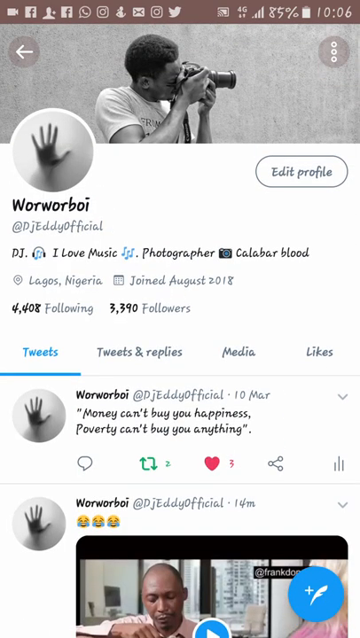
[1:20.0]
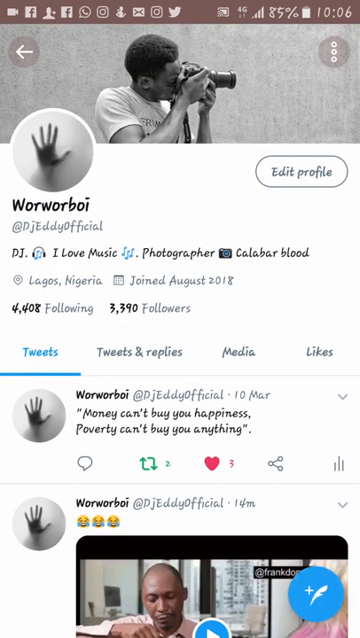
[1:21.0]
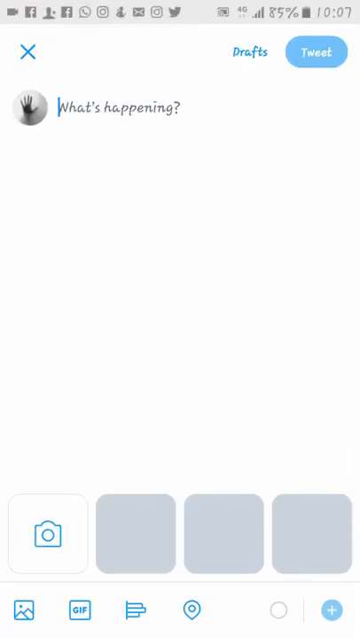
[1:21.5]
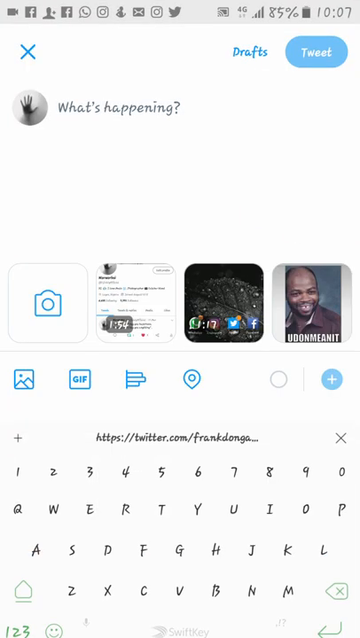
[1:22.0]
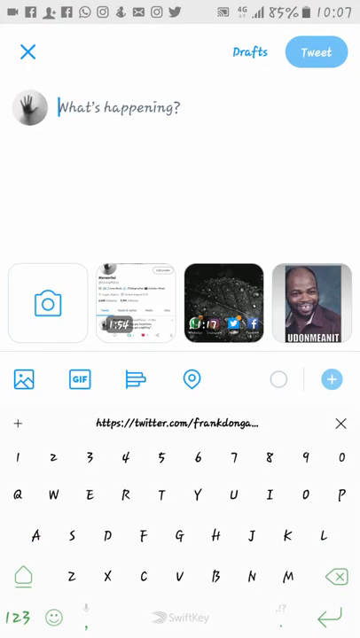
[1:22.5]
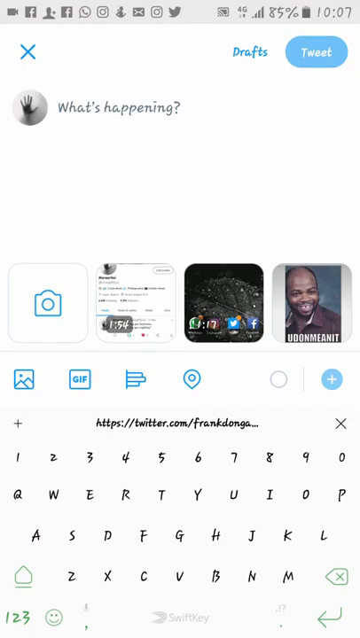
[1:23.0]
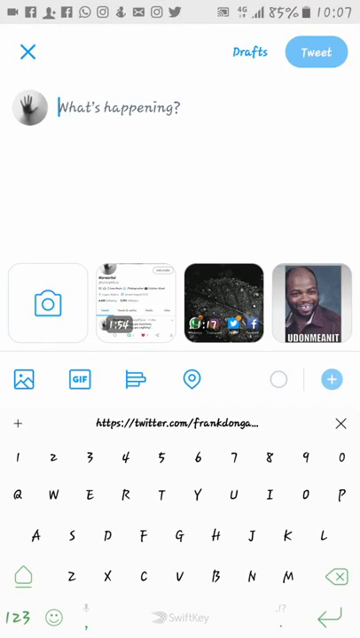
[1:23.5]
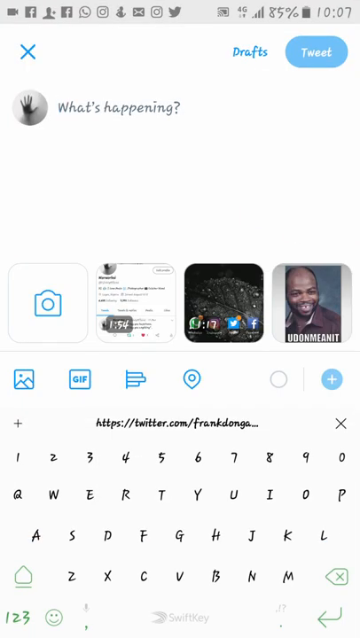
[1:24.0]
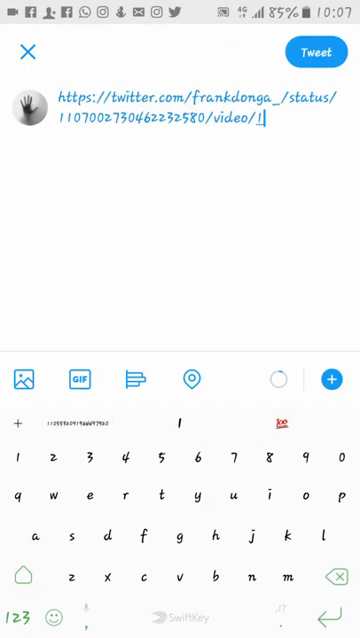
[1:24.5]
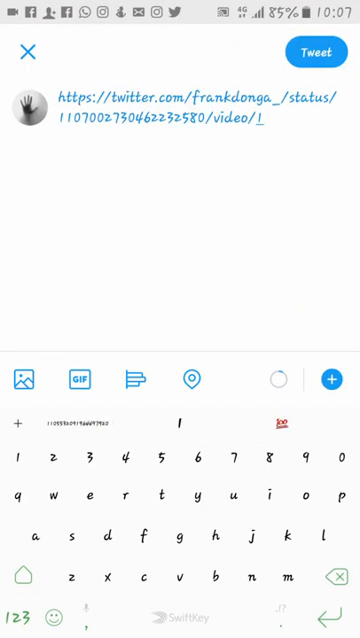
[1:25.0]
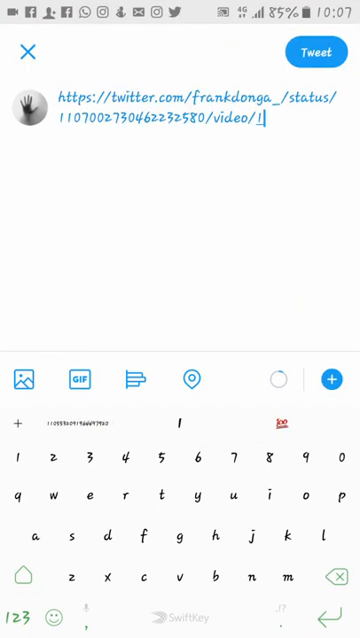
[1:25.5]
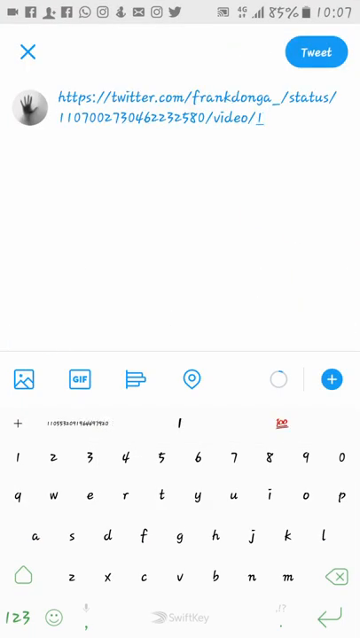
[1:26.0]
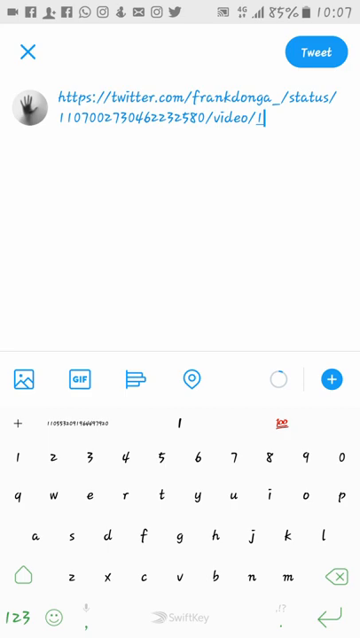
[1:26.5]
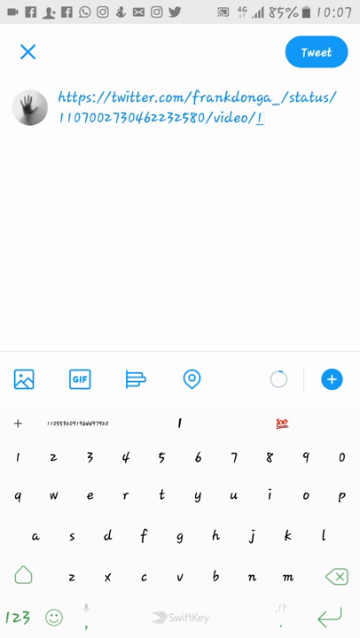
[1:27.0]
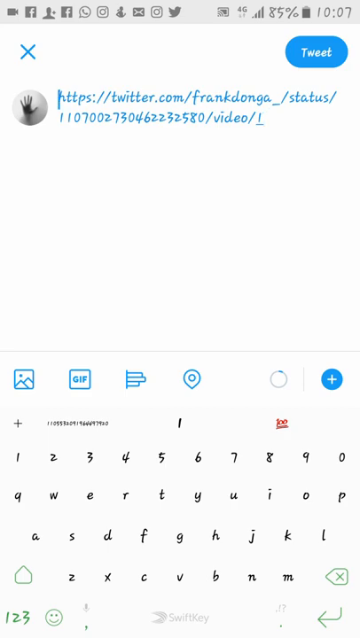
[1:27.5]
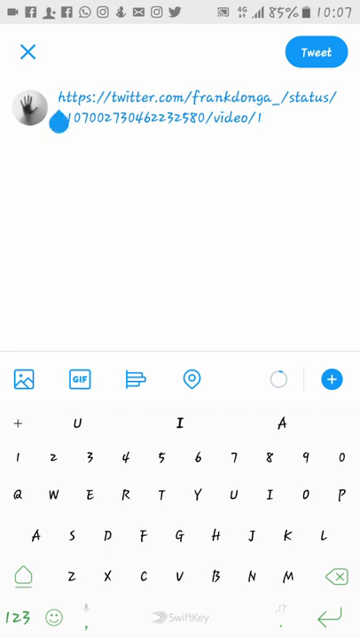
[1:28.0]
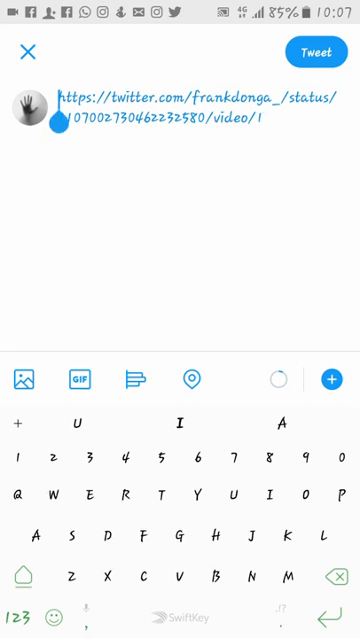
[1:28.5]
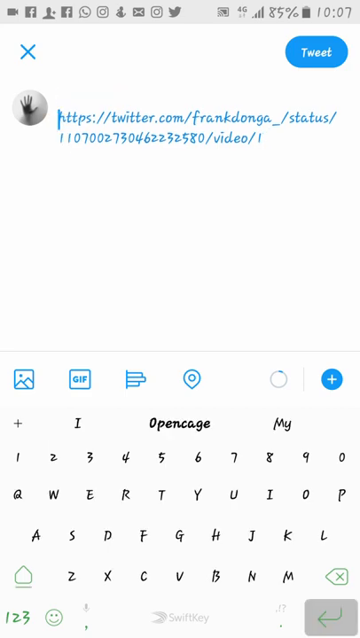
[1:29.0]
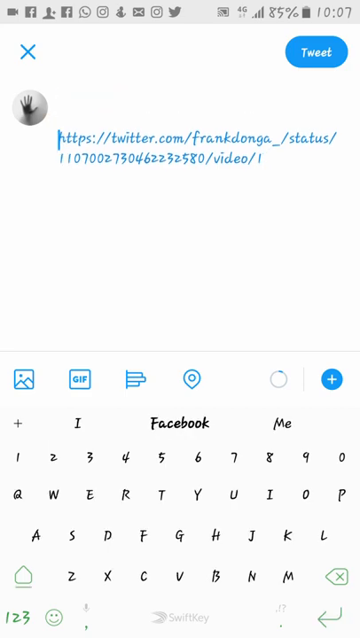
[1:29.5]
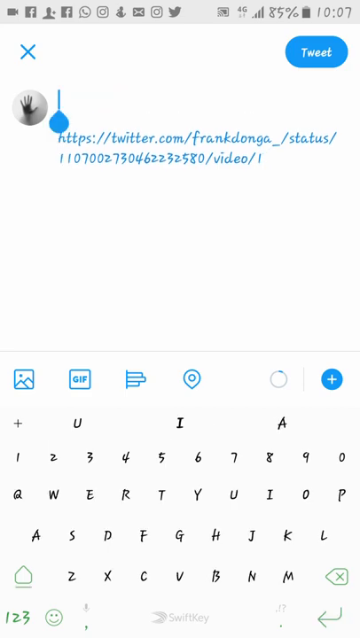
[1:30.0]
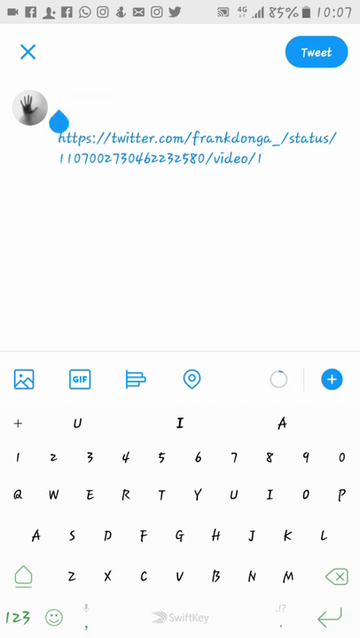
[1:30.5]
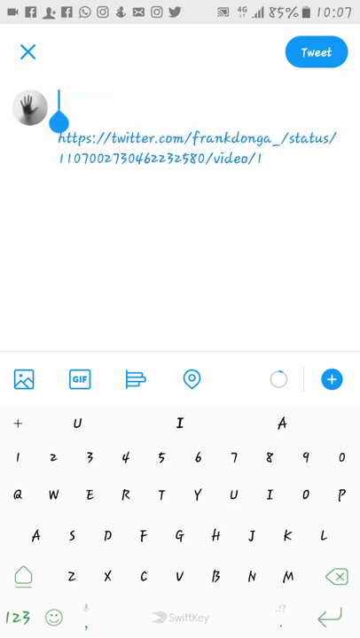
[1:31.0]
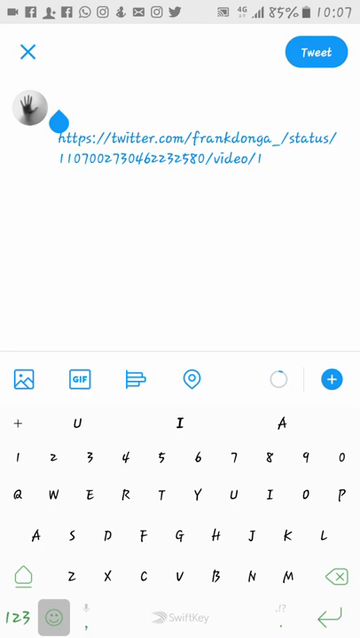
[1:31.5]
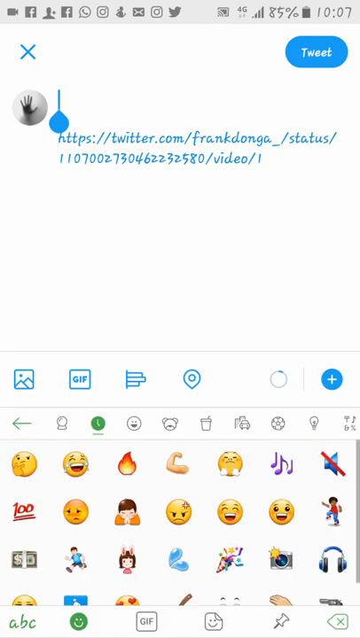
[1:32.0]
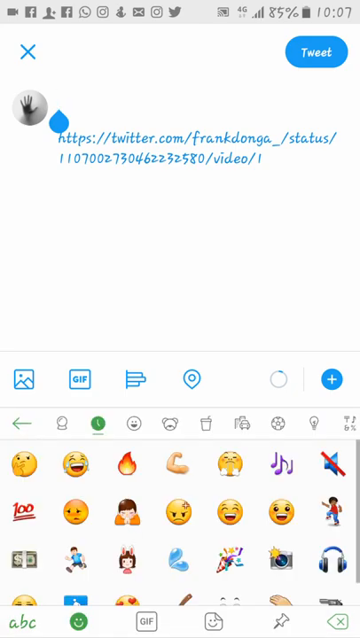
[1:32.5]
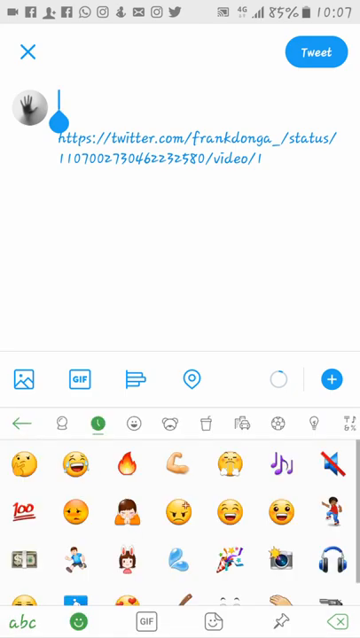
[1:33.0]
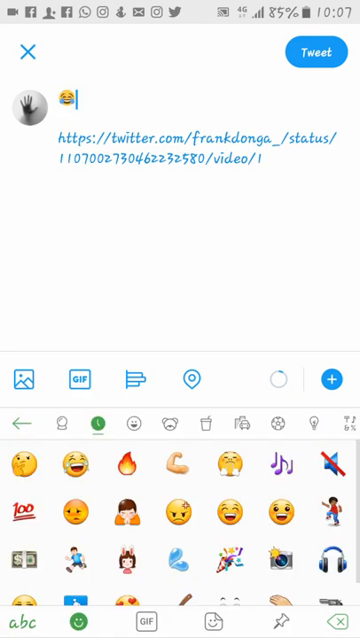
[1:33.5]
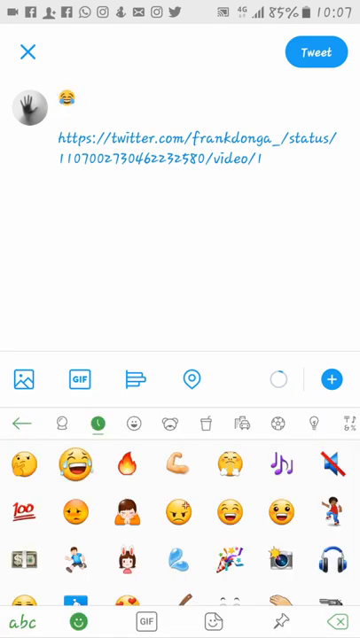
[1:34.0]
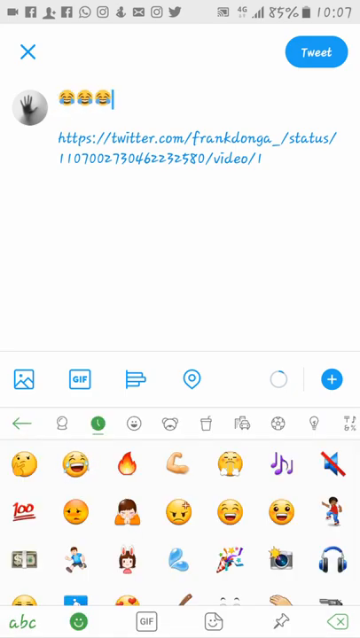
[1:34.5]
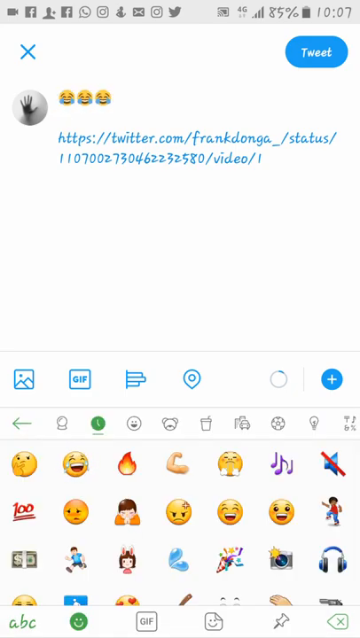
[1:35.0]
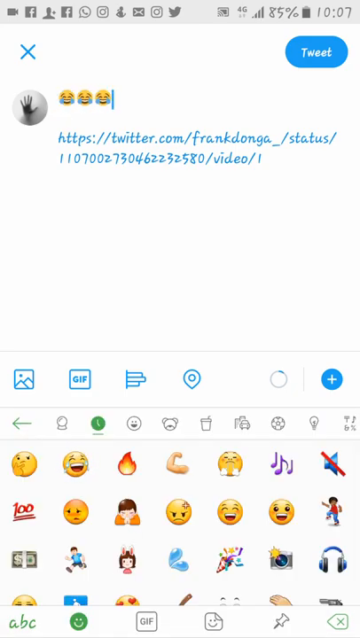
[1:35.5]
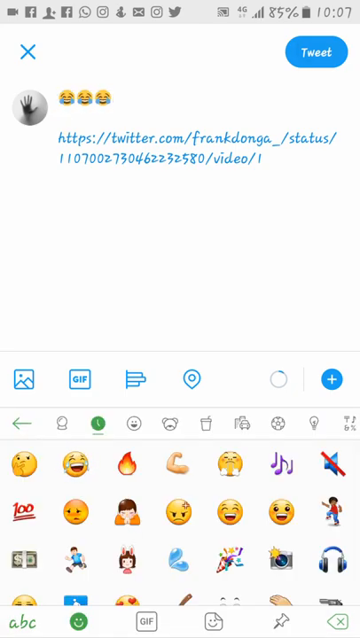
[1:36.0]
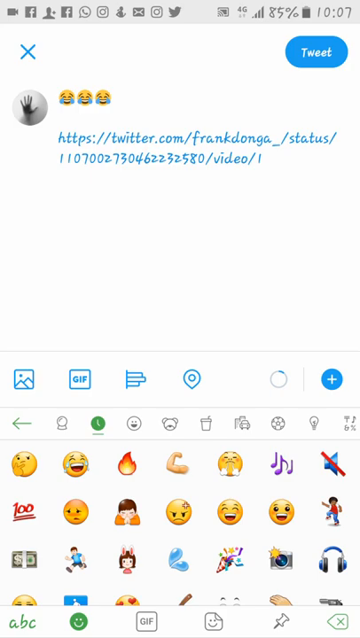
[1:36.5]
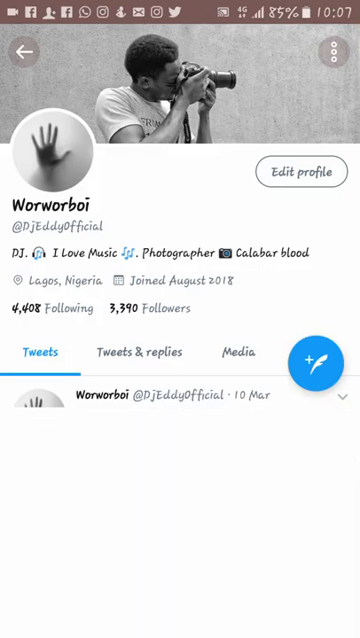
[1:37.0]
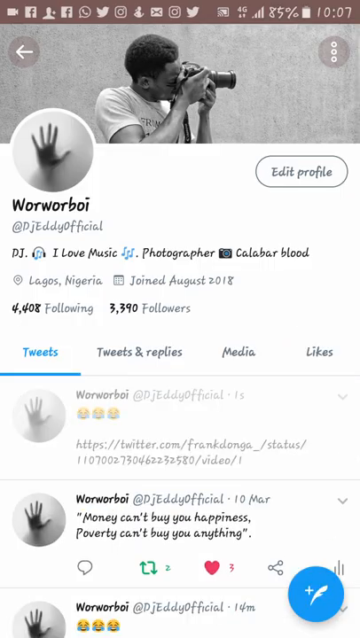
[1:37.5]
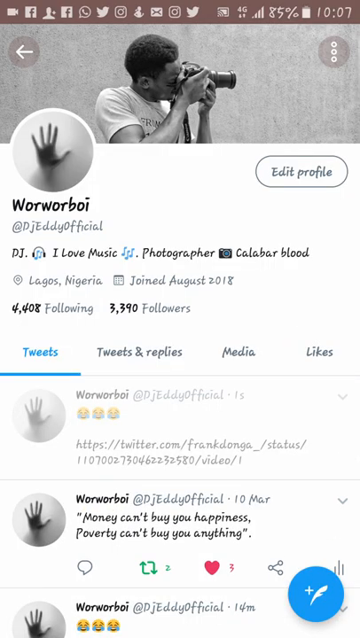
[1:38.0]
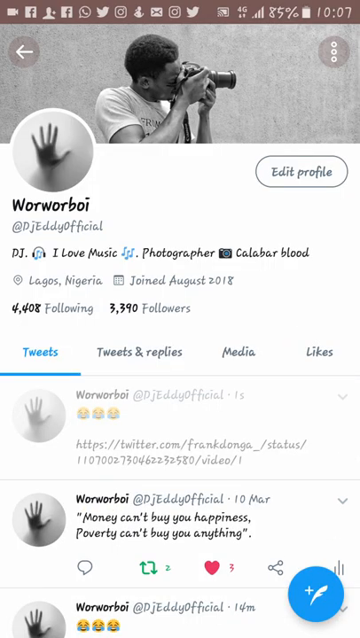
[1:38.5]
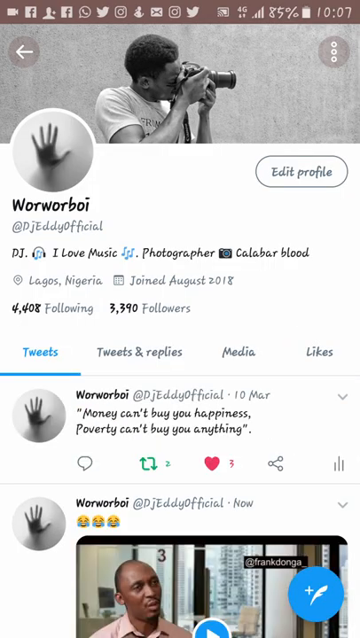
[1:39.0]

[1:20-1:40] The man takes the link he copied from Dunga's previously posted video to his own Twitter page, where he scrolls up and down looking for where to paste it. He goes to where "tweet" is written, writes a caption, and then puts in the link he copied before, and the video shows up. The next screen shows a Twitter page by Worworboi, displaying his picture with a camera in his hand.